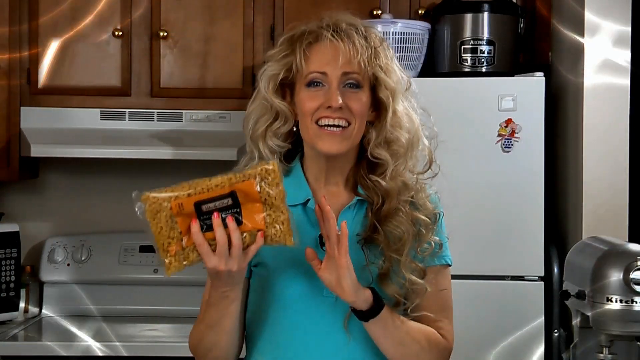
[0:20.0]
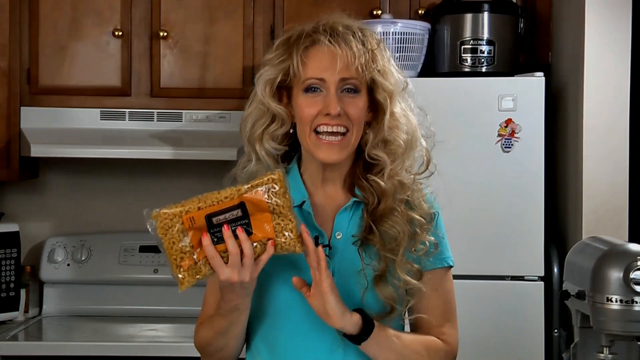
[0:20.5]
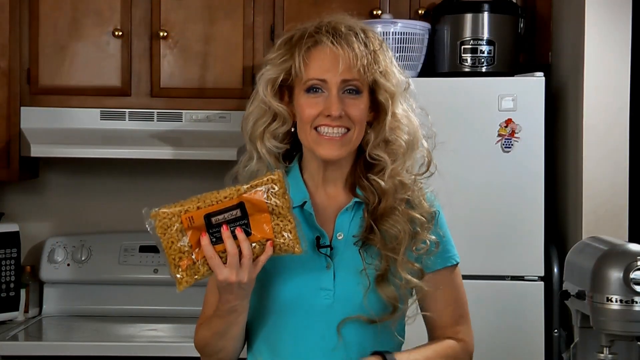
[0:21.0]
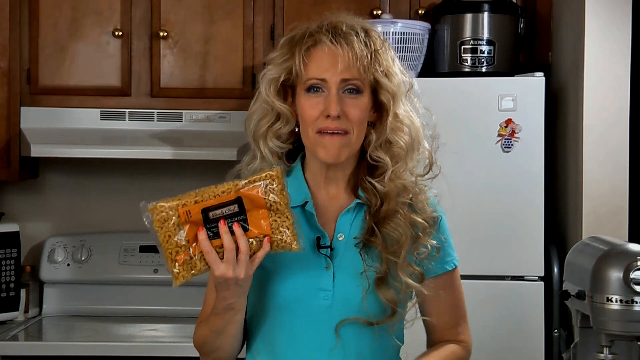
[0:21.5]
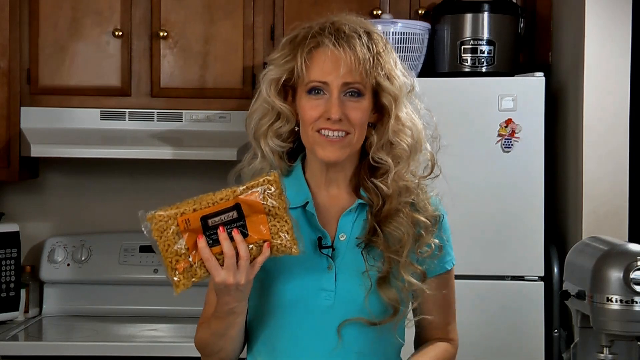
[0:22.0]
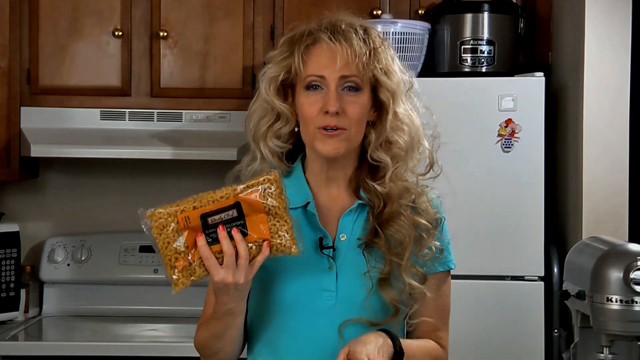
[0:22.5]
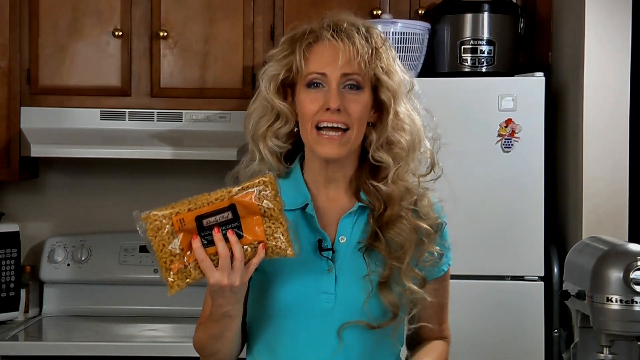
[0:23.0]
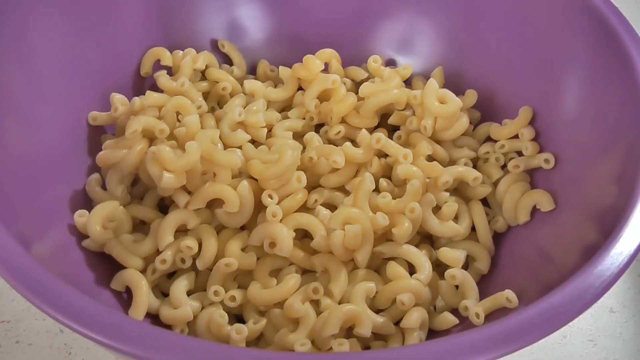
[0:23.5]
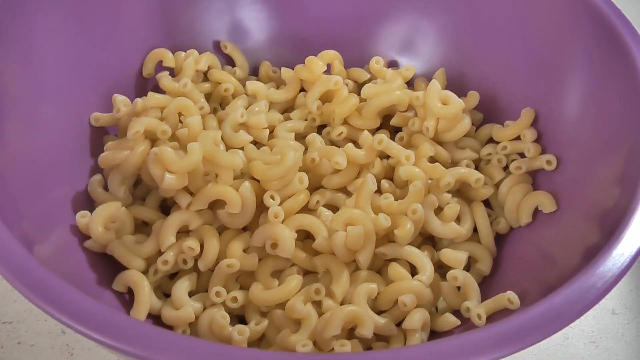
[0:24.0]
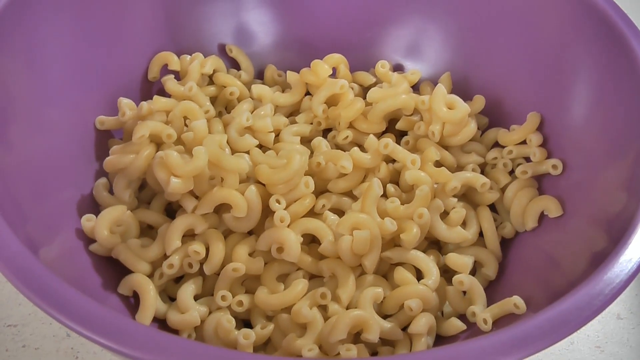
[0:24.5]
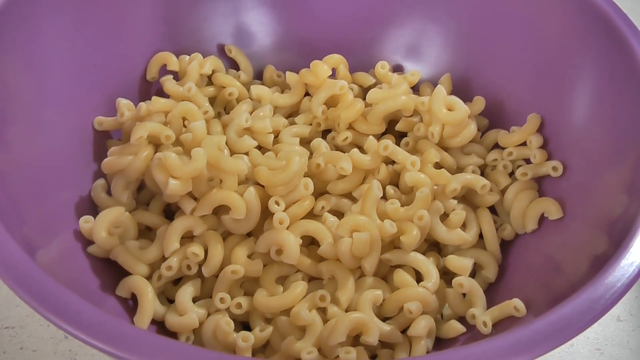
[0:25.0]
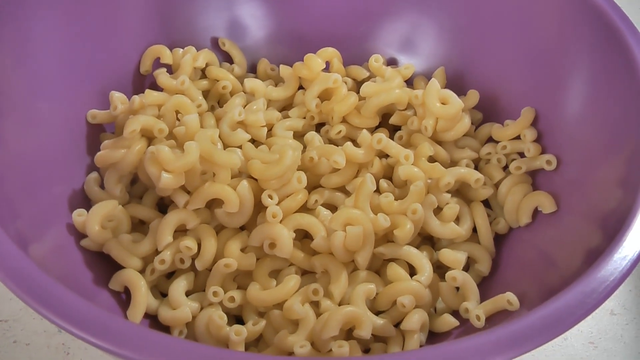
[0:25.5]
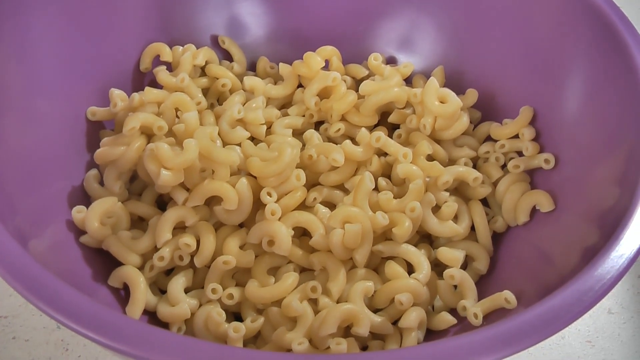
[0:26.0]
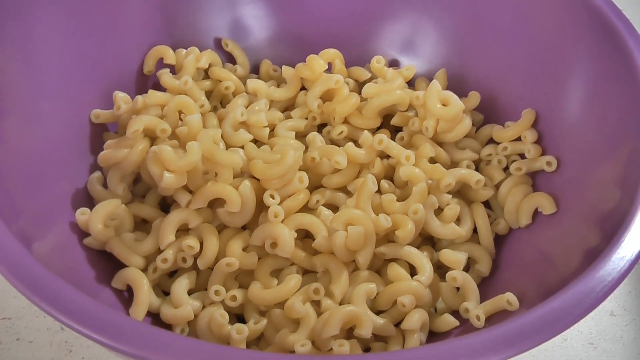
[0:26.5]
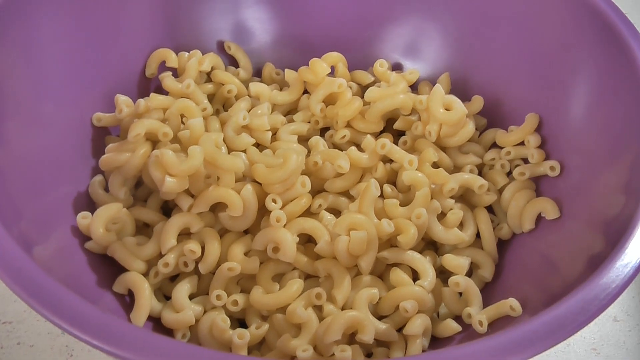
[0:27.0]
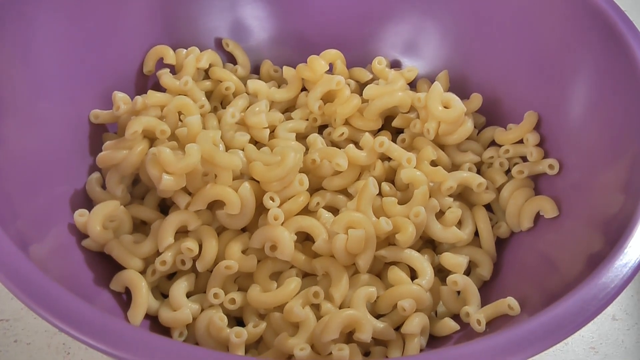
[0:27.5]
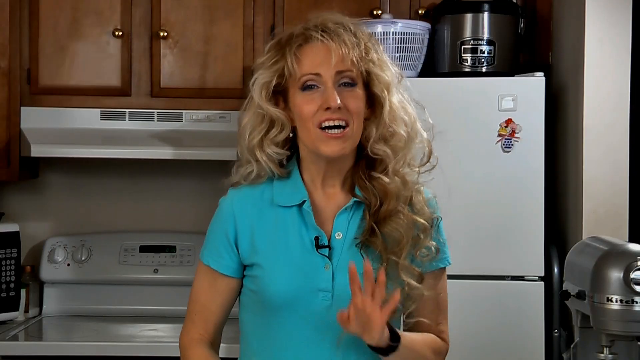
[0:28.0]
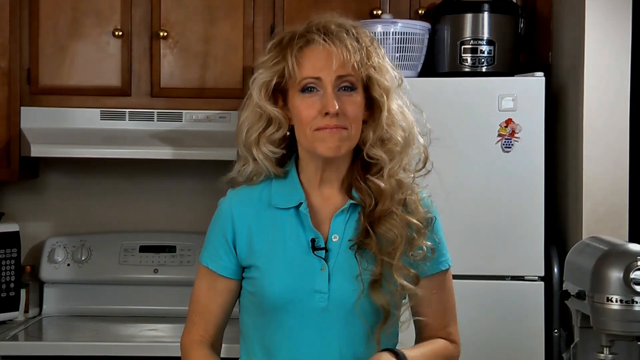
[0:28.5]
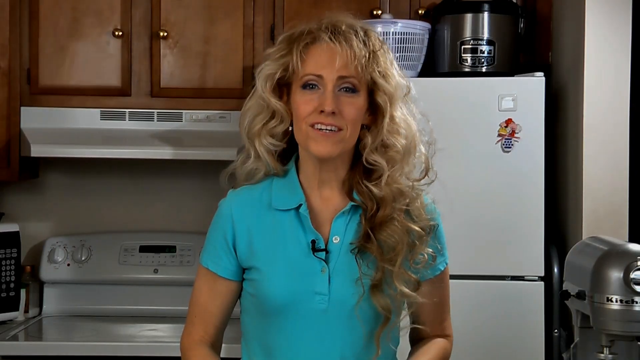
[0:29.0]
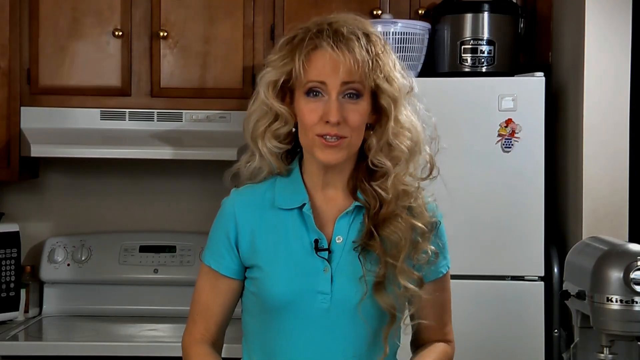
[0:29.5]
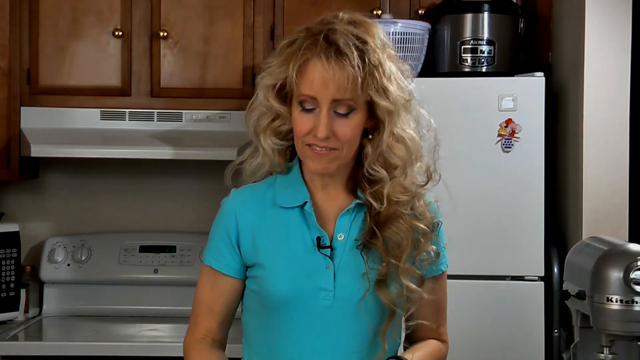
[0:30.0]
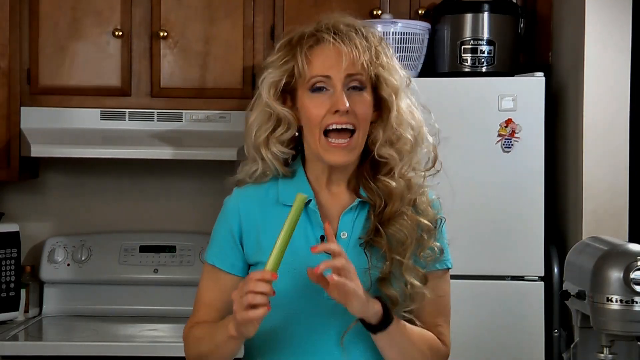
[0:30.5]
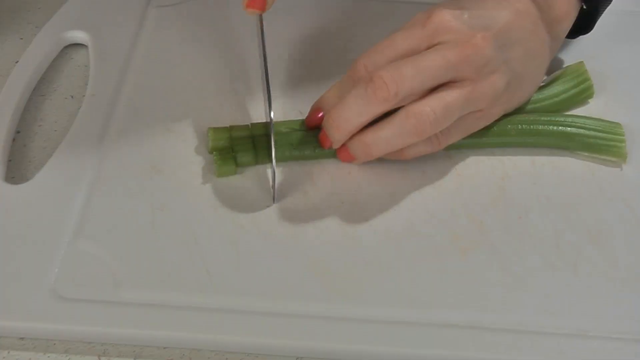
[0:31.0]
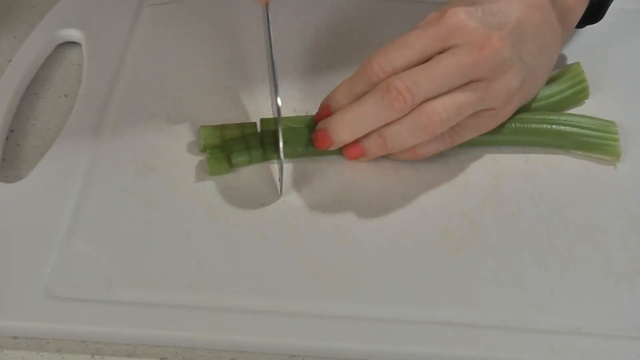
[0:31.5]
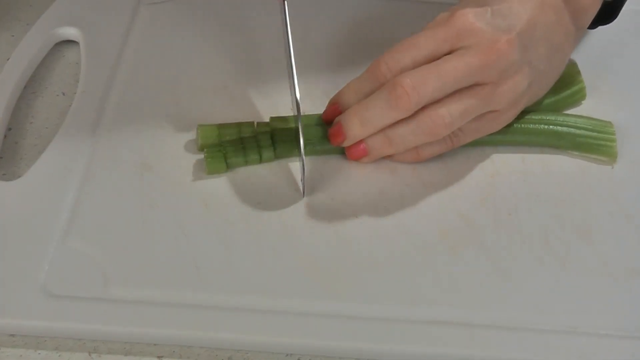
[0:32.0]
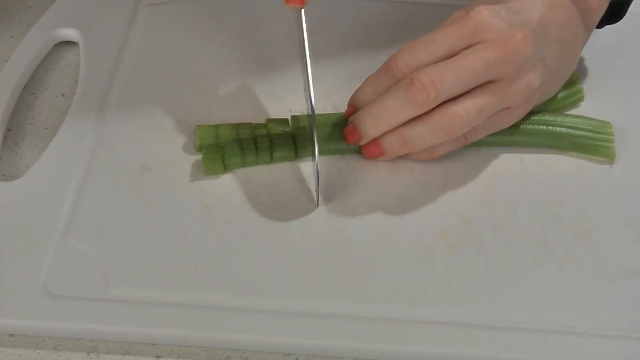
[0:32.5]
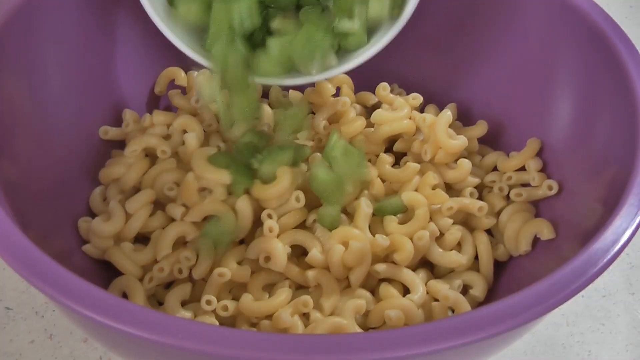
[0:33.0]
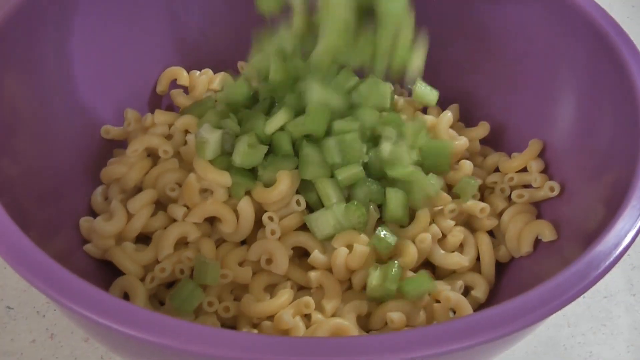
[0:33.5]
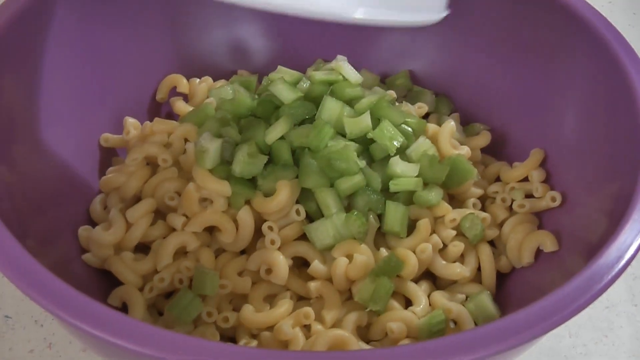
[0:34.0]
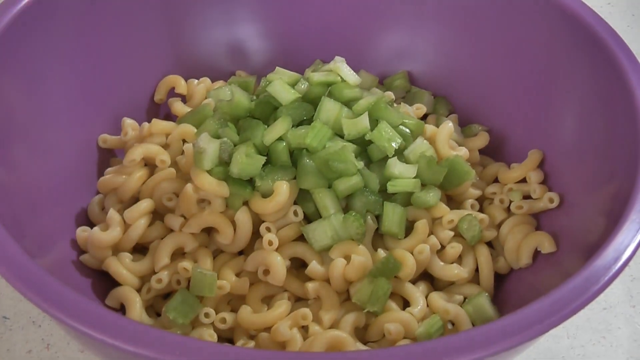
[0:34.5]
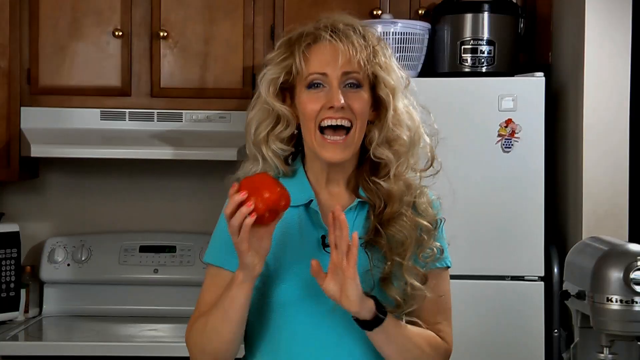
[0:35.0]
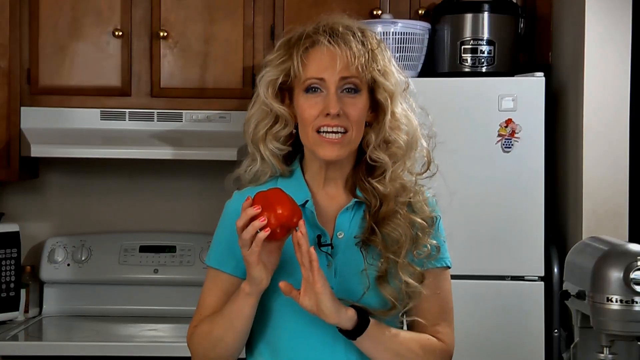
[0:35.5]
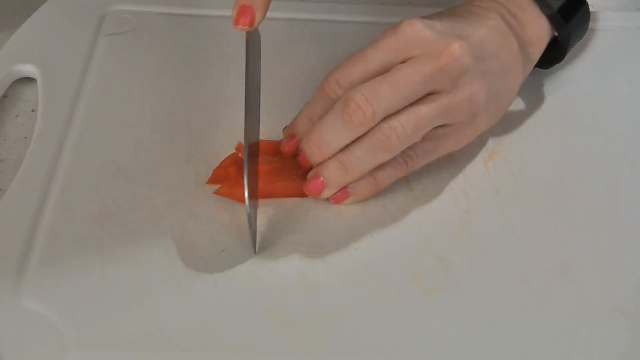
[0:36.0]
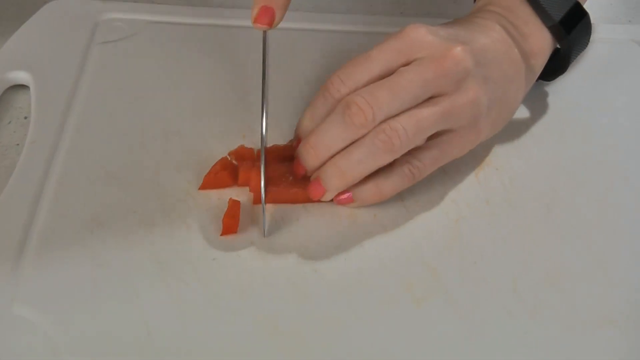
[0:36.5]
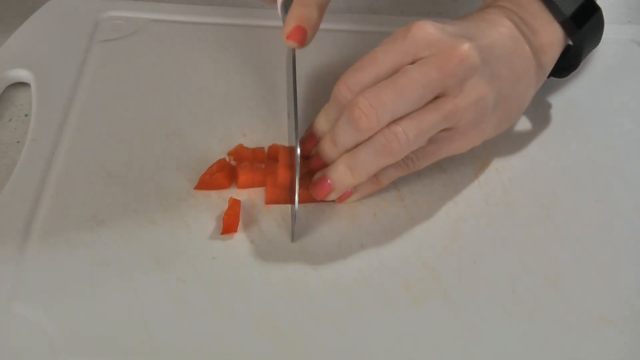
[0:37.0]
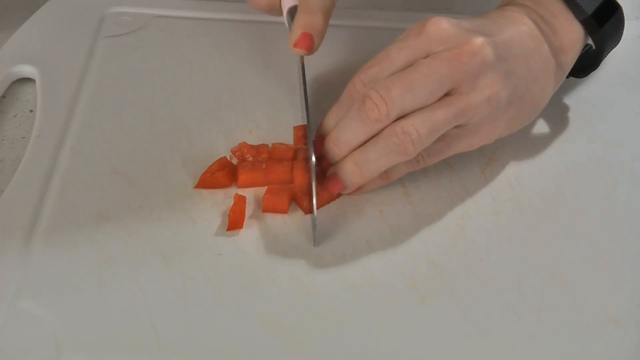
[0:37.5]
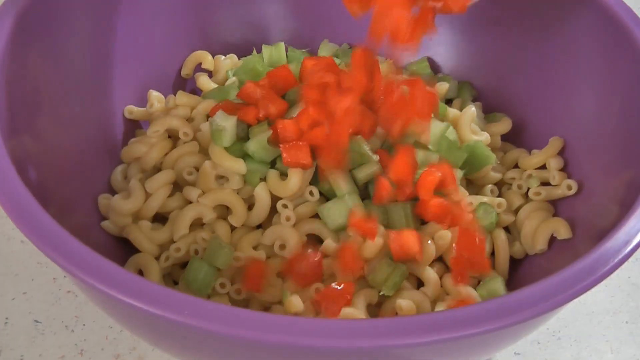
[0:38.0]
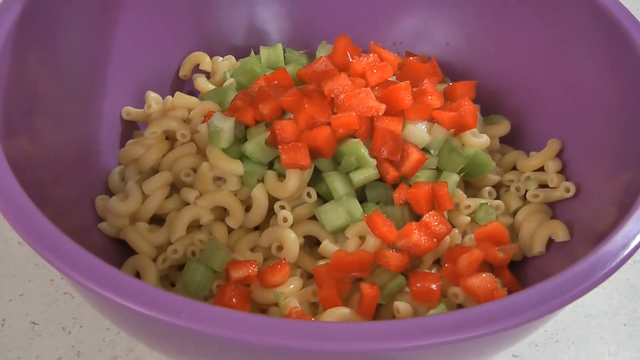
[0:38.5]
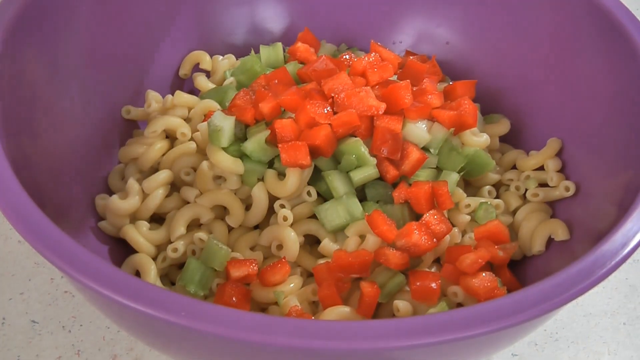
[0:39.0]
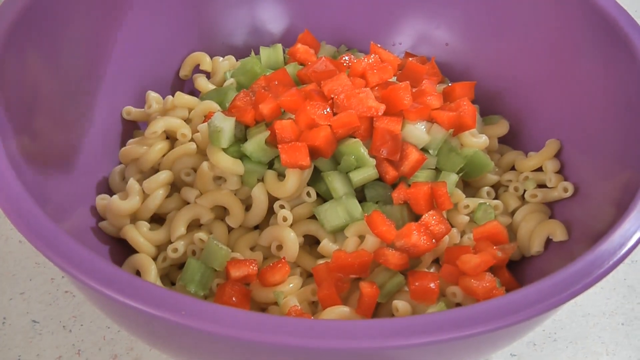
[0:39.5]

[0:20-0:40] The woman holds a packet of uncooked macaroni and shows it to the camera while she talks. Next, a purple bowl with macaroni inside is shown; the macaroni appears to have been washed. The woman is shown again, still talking to the camera. She then has a knife and a green onion and cuts only the leaves of the onion. She puts the cut leaves together into a white bowl, then pours them onto the macaroni in a paper bowl.